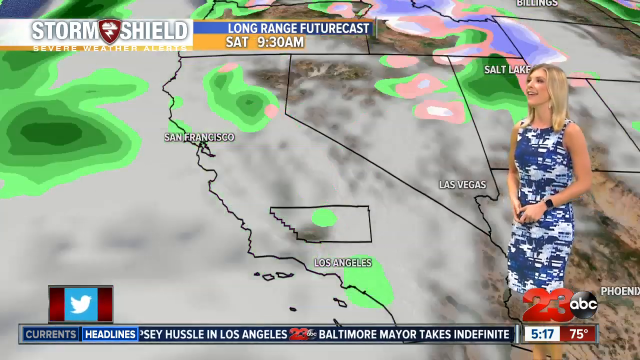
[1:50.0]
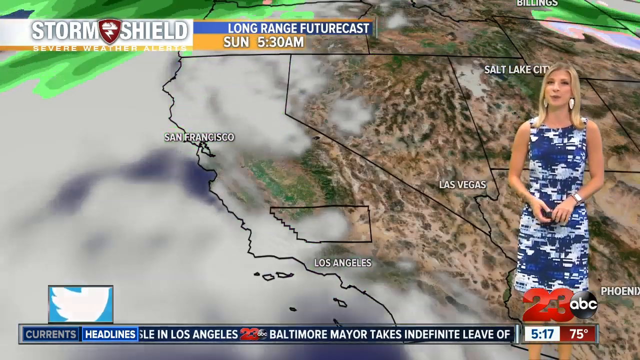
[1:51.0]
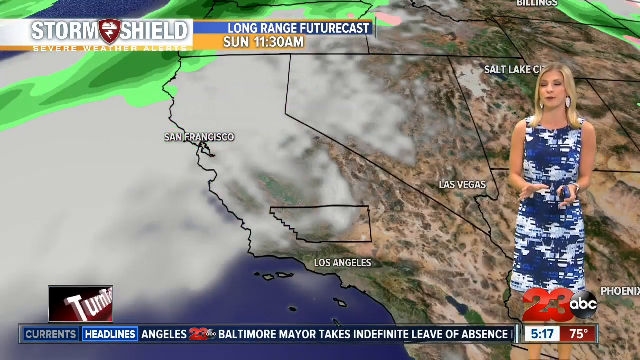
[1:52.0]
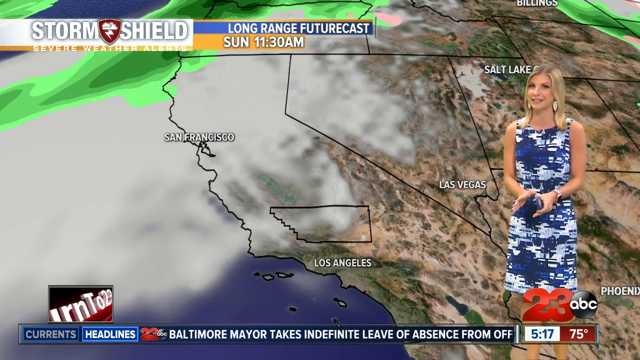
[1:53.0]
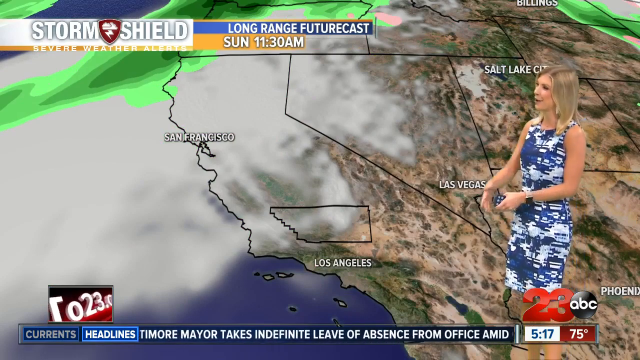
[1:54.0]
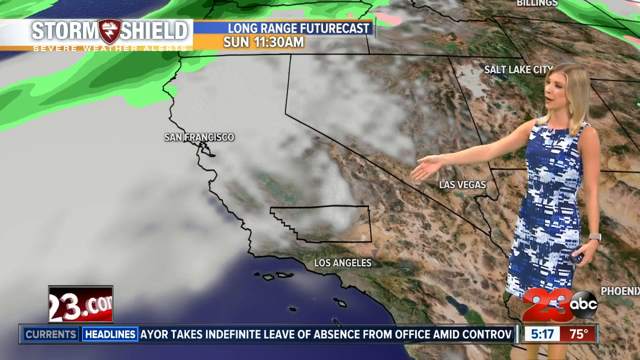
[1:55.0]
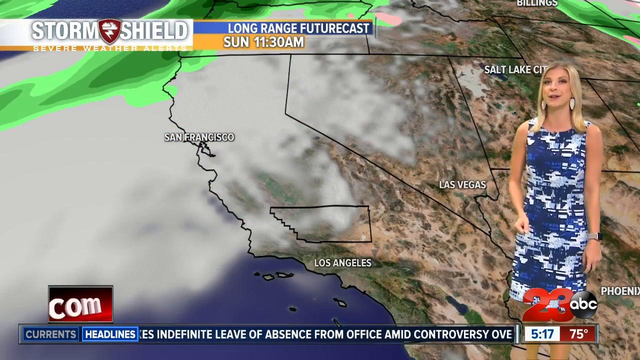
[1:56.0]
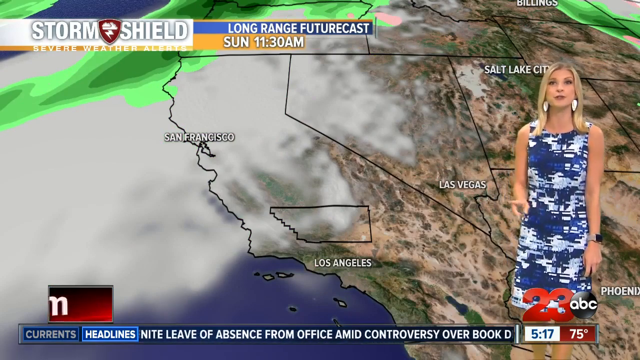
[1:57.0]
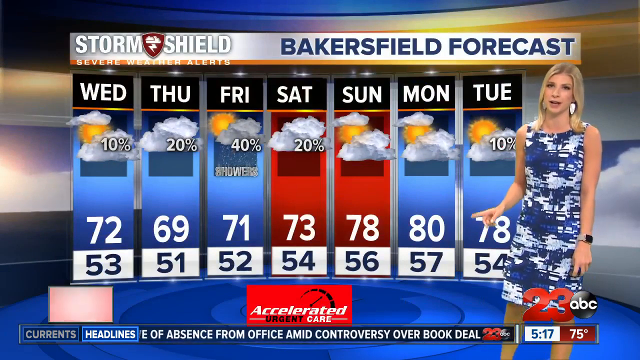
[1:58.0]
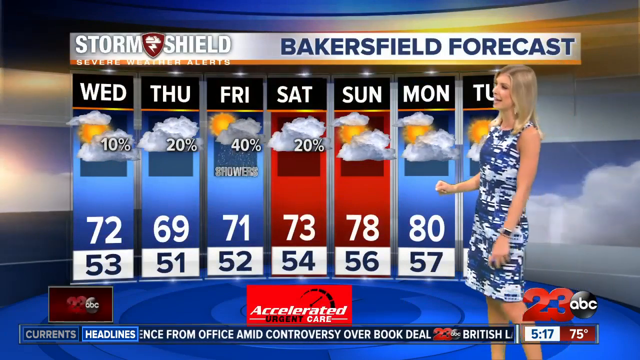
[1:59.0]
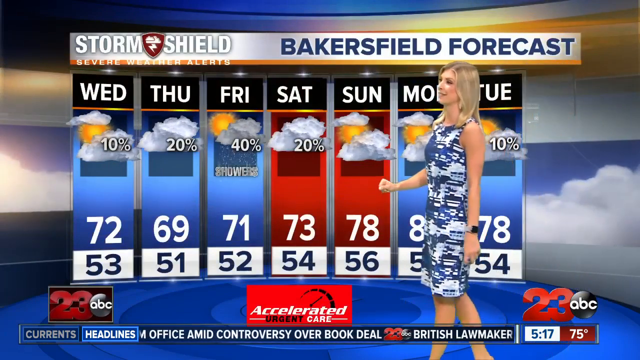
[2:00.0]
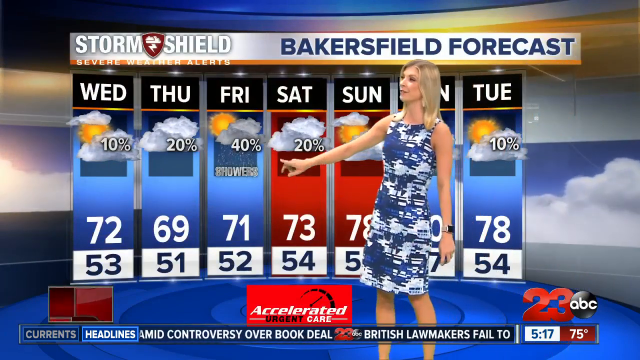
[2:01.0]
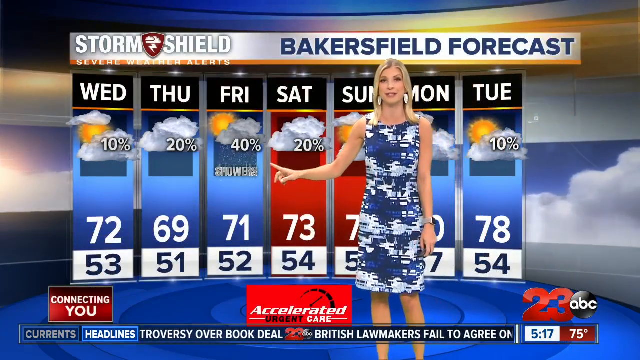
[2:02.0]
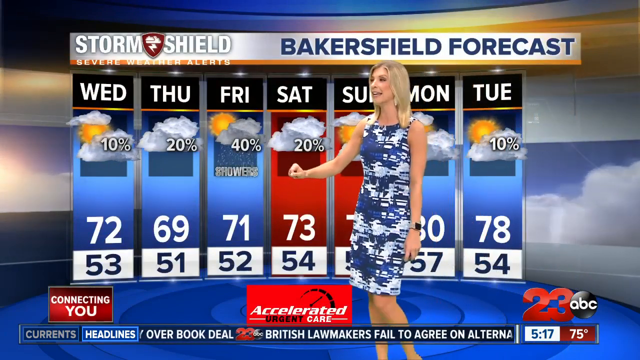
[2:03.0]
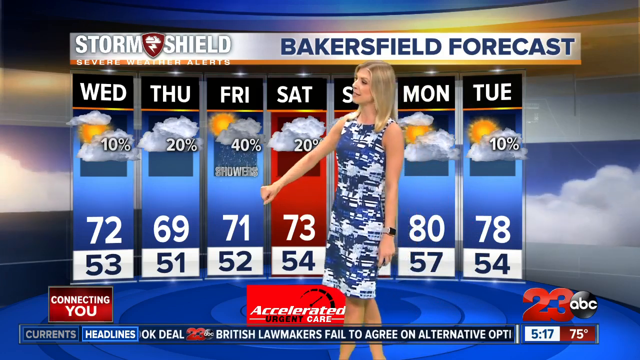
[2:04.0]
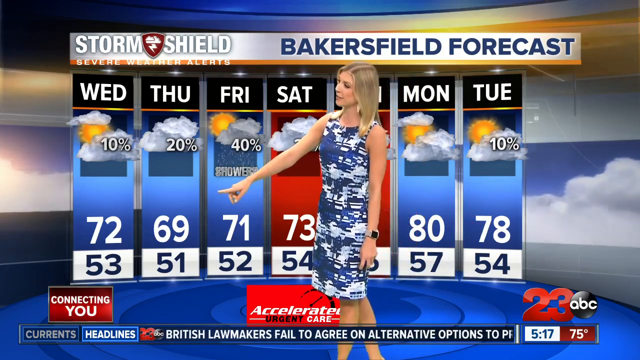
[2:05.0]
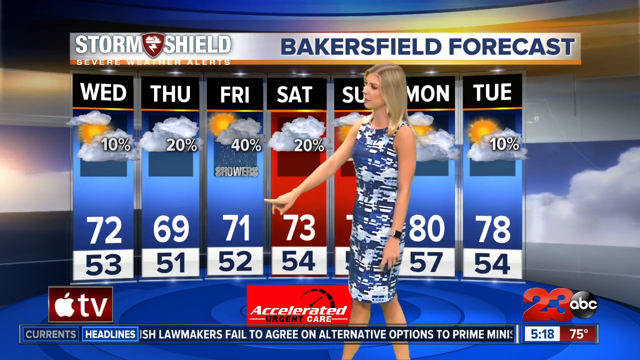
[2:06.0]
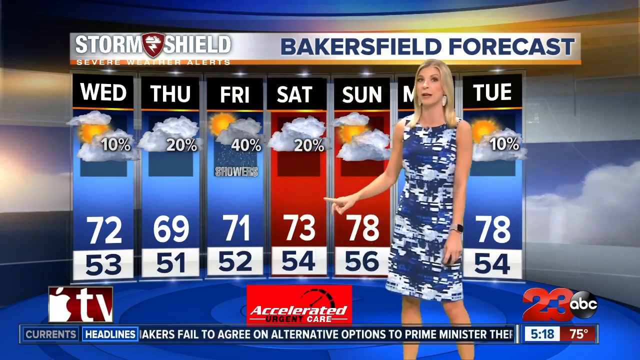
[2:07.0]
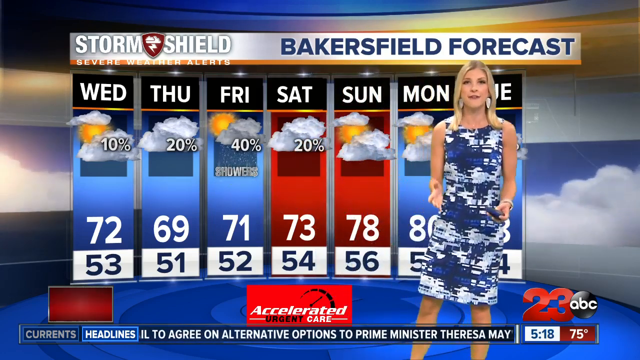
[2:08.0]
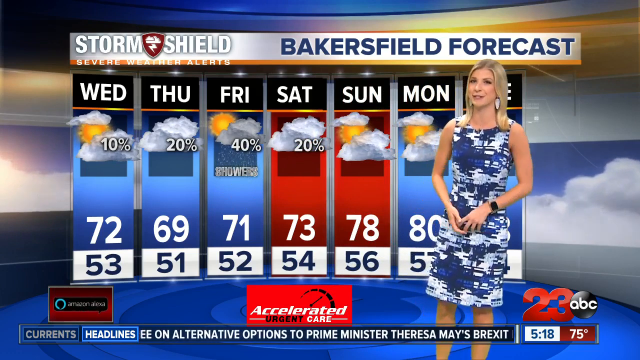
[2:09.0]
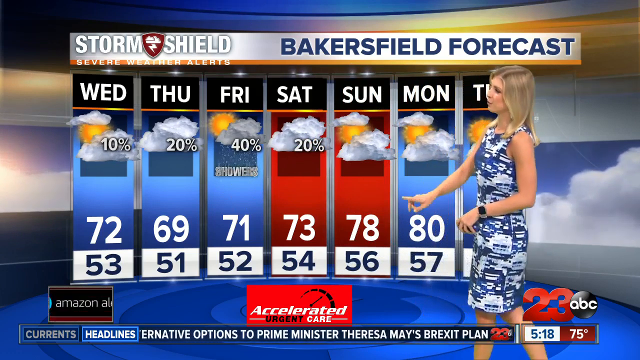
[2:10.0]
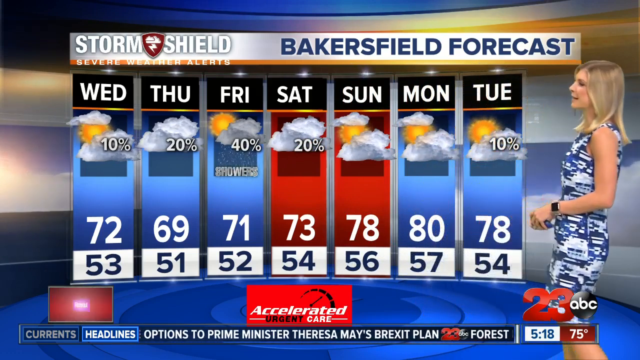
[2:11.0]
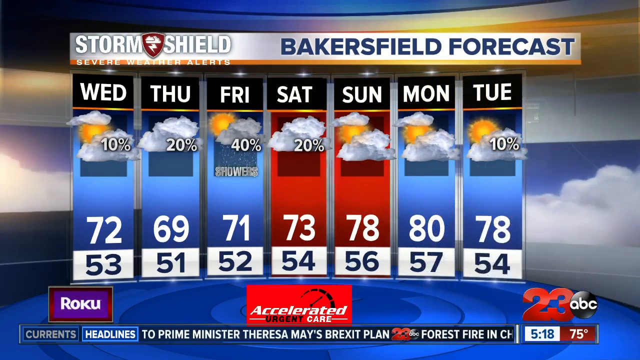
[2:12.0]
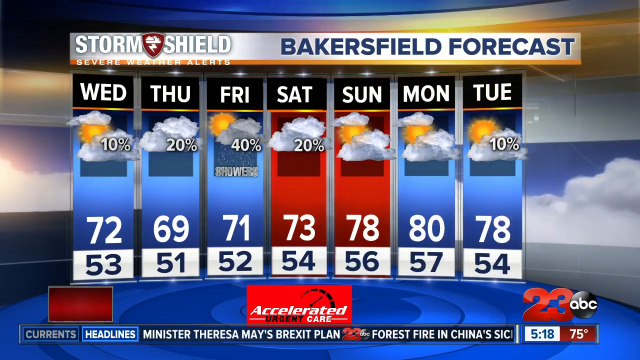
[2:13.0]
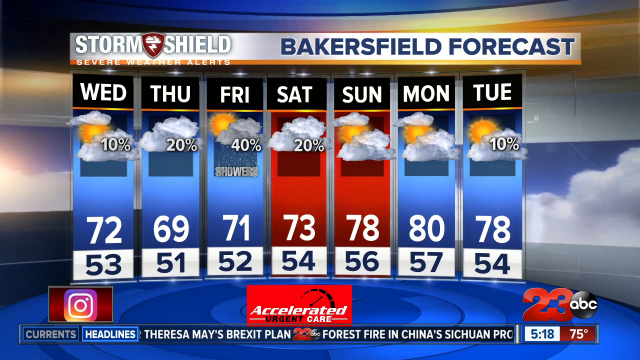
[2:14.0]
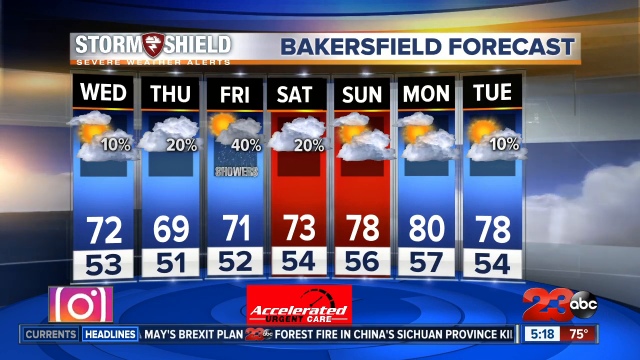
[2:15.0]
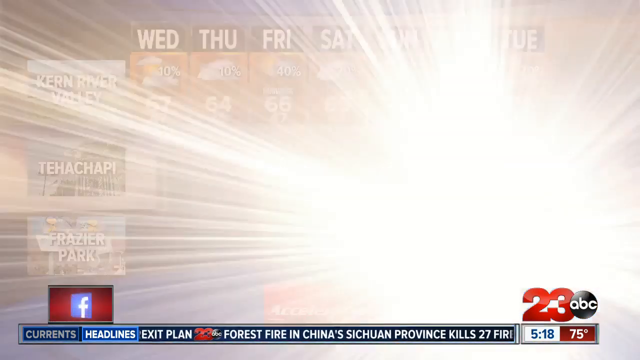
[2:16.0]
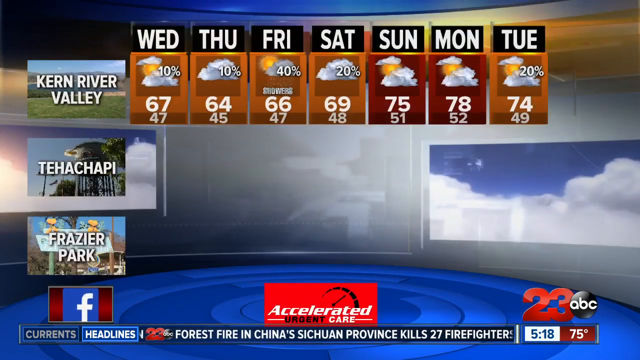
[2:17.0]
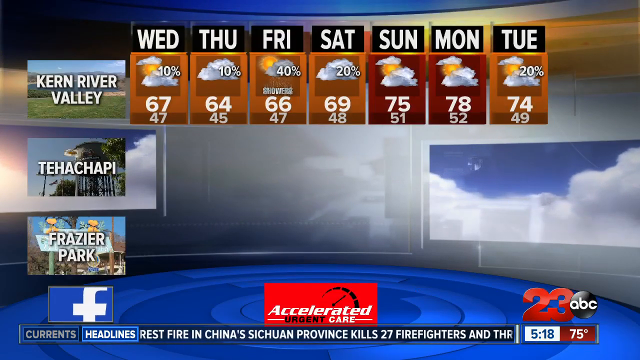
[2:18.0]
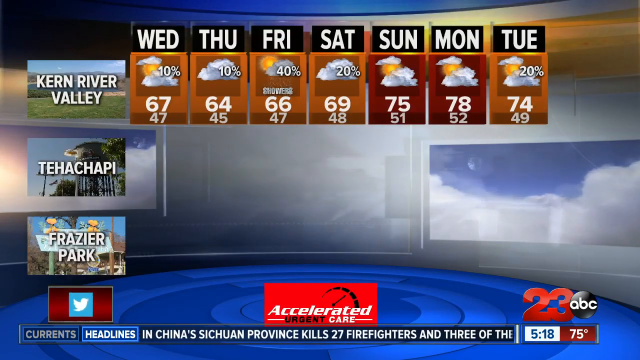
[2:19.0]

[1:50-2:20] The news anchor stays in the bottom right of the screen with her hand out, pointing toward the Las Vegas area. The screen changes to a graphic behind her reading "Bakersfield Forecast," running from Wednesday to Tuesday. Wednesday, Thursday, Friday and Saturday apparently all show rain percentages ranging from 10 to 40, along with temperatures: Wednesday a high of 72 and low of 53, Thursday a high of 69 and low of 51, Friday a high of 71 and low of 52, Saturday a high of 73 and low of 54, Sunday a high of 78 and low of 56, and Monday a high of 80 and low of 57. She indicates Friday, which has the highest chance of rain at 40 percent and a raining cloud on the screen. Tuesday shows a 10 percent chance of rain, a high of 78 and a low of 54.